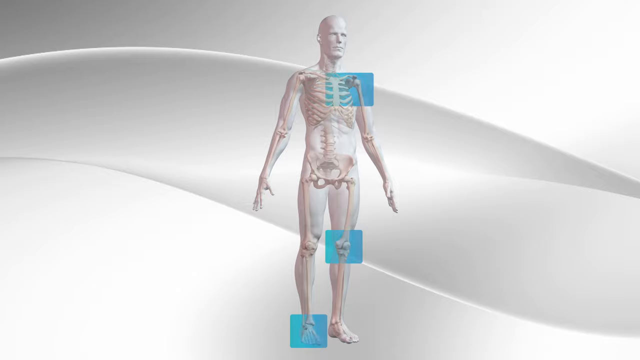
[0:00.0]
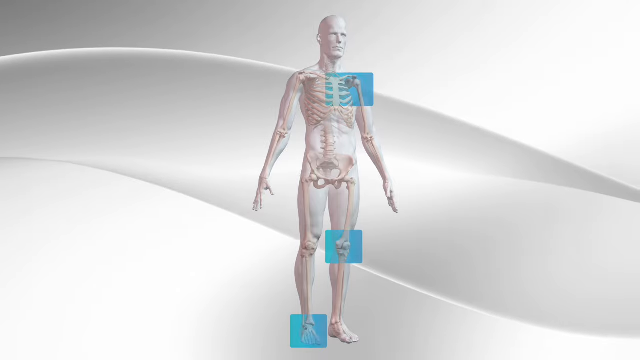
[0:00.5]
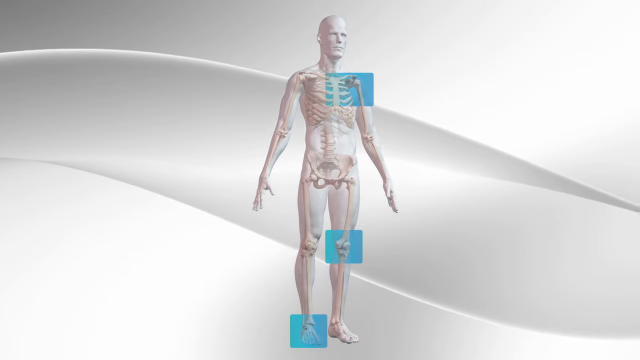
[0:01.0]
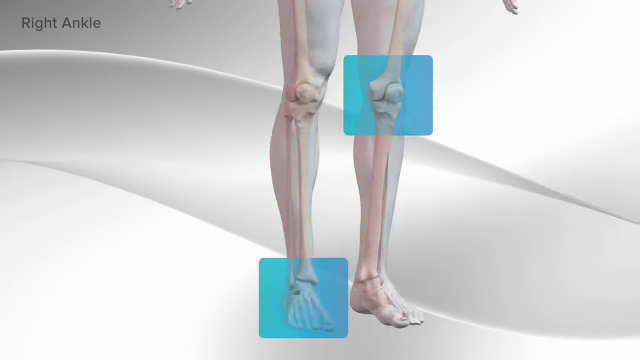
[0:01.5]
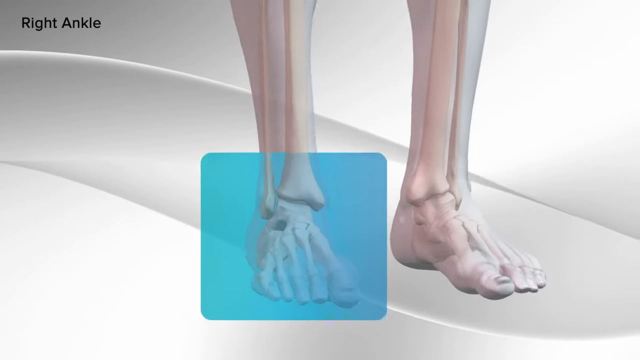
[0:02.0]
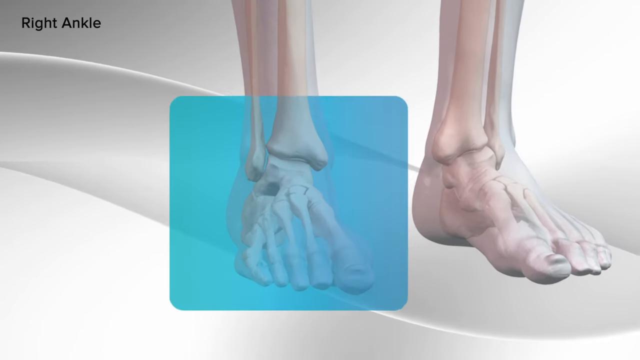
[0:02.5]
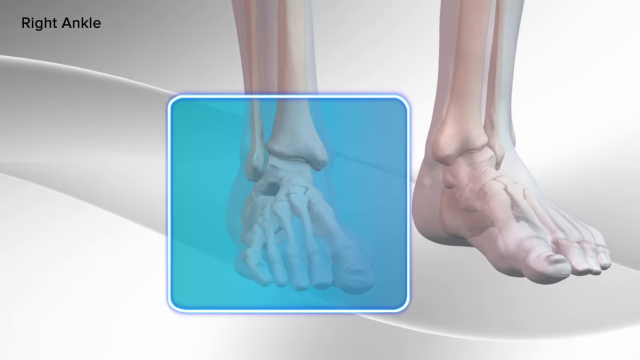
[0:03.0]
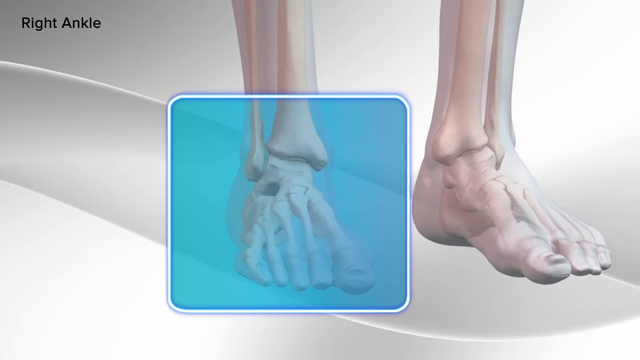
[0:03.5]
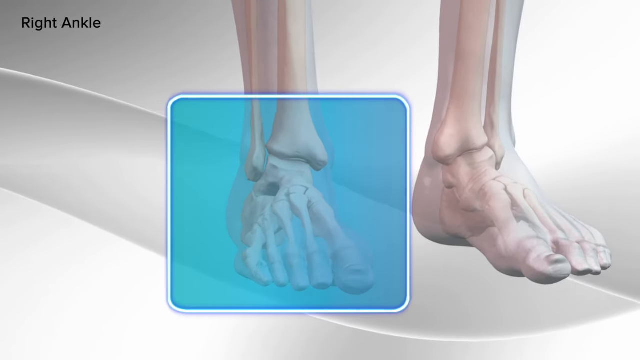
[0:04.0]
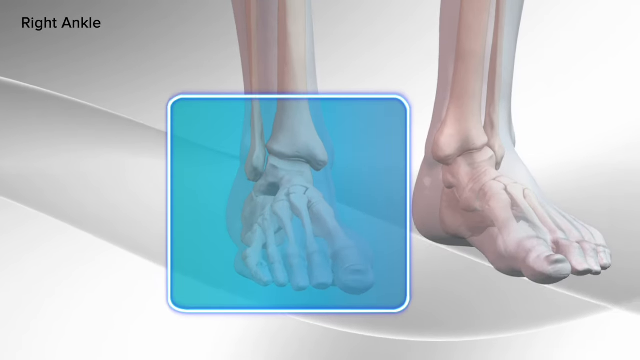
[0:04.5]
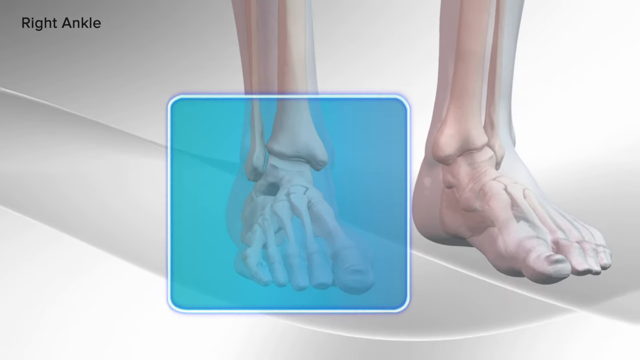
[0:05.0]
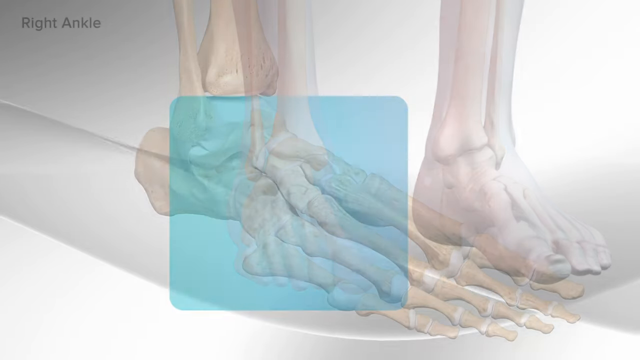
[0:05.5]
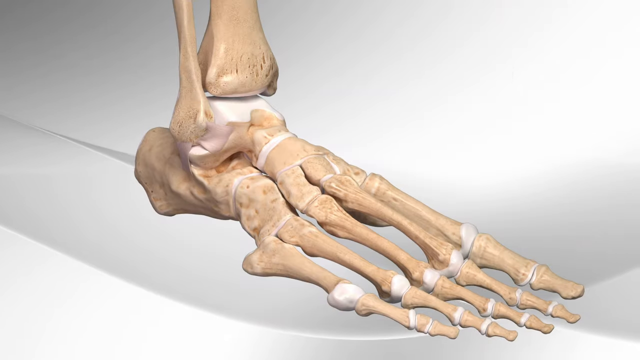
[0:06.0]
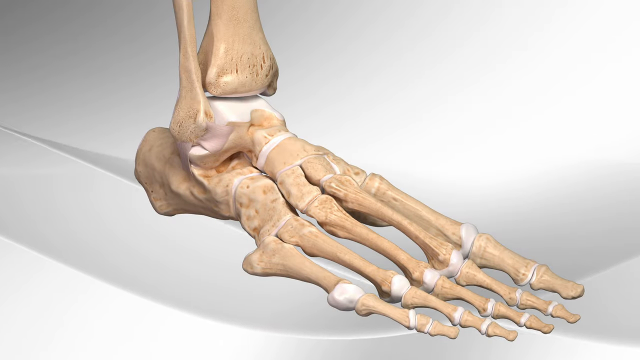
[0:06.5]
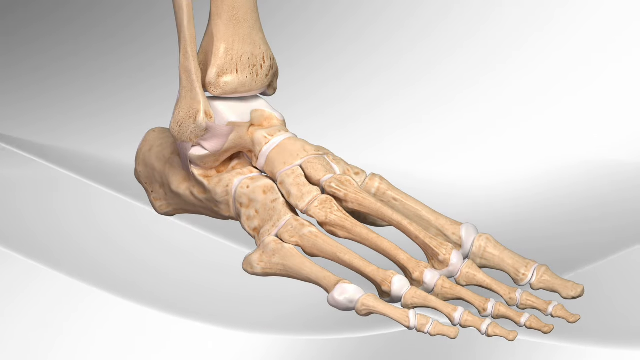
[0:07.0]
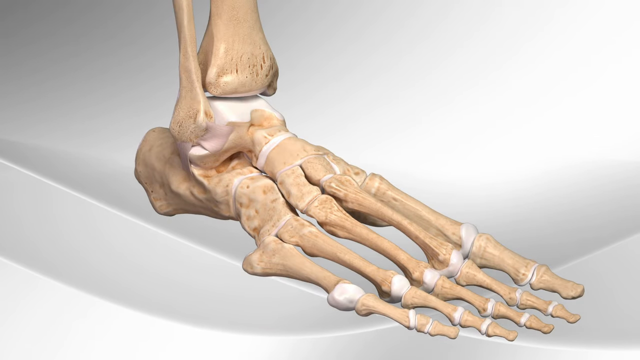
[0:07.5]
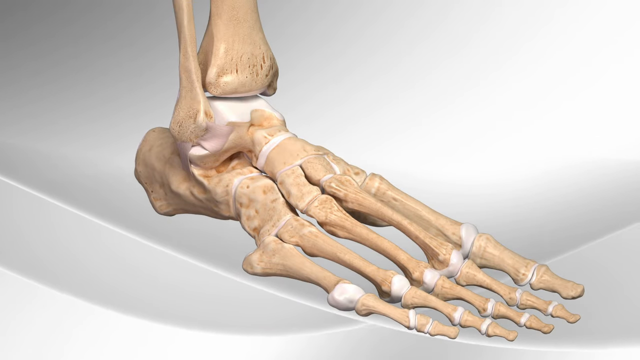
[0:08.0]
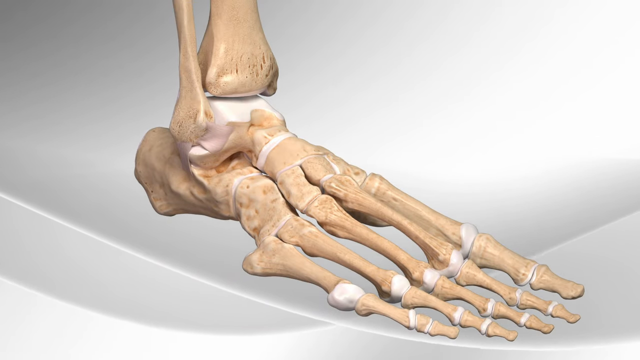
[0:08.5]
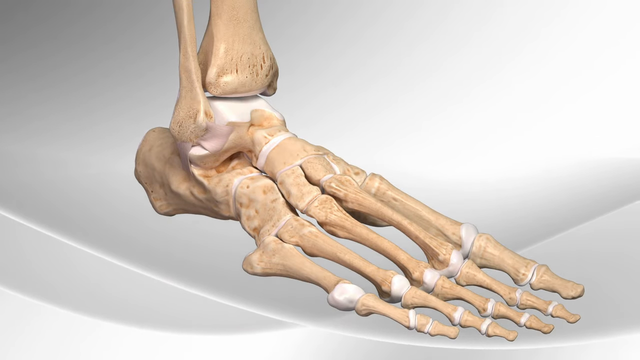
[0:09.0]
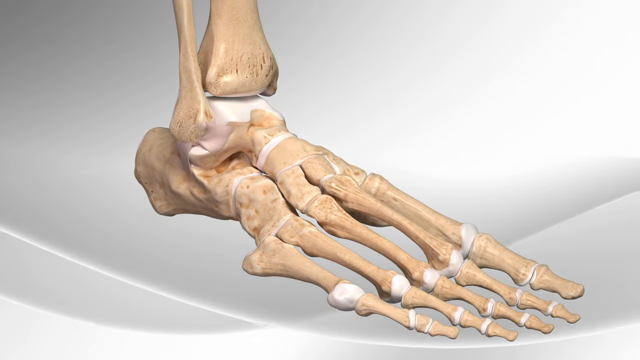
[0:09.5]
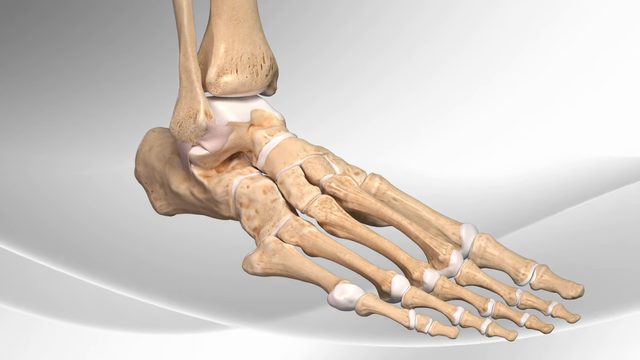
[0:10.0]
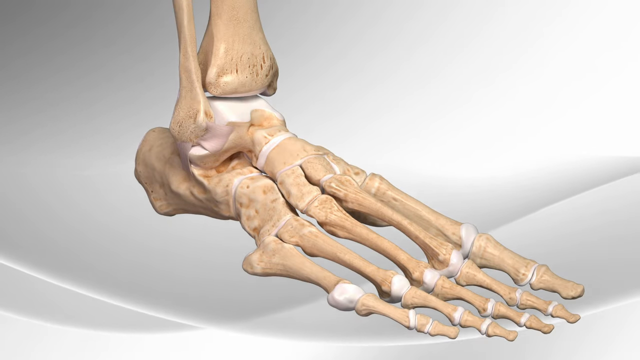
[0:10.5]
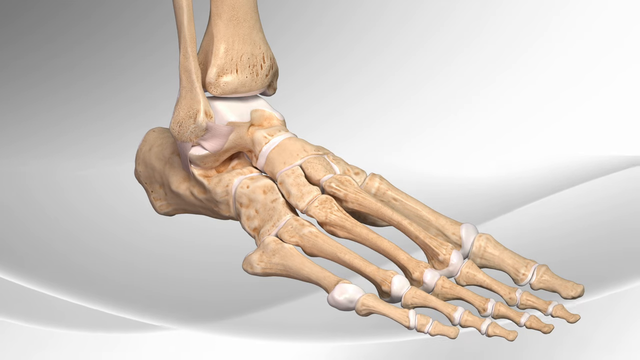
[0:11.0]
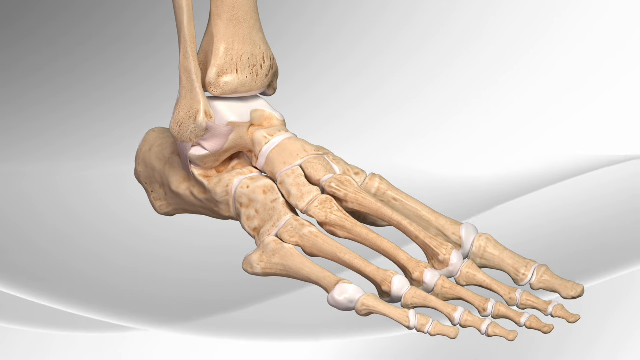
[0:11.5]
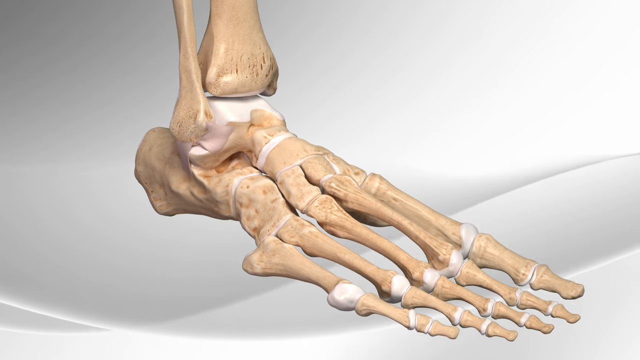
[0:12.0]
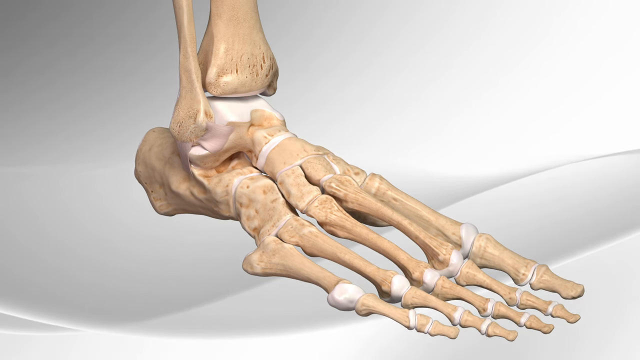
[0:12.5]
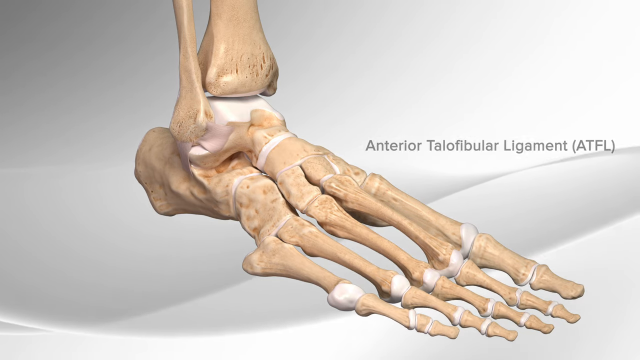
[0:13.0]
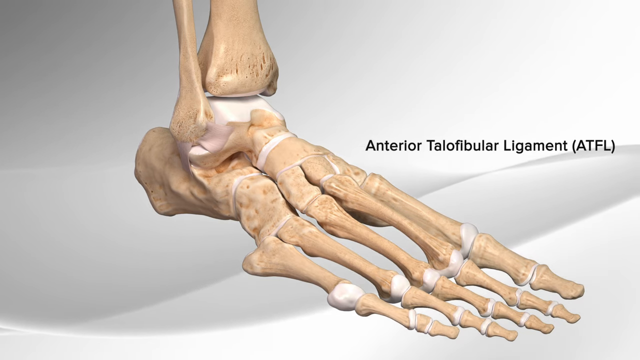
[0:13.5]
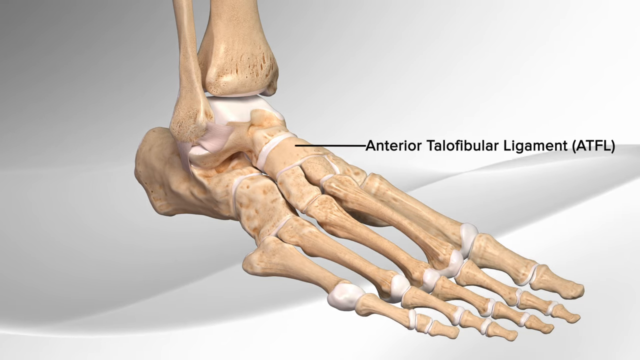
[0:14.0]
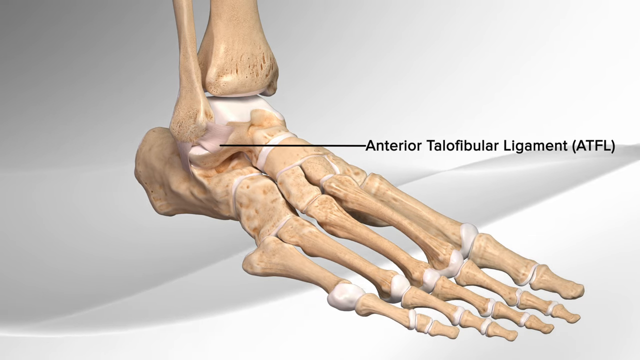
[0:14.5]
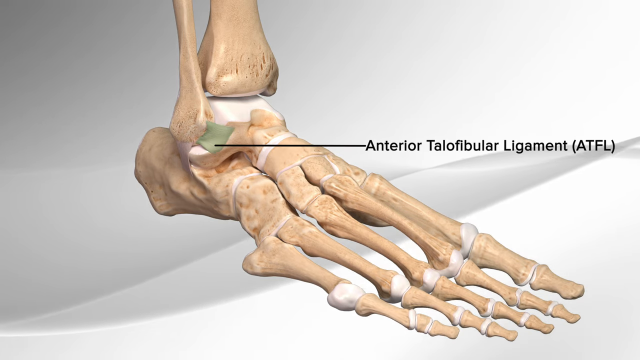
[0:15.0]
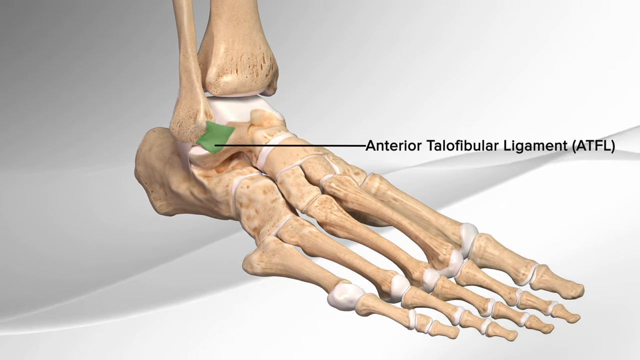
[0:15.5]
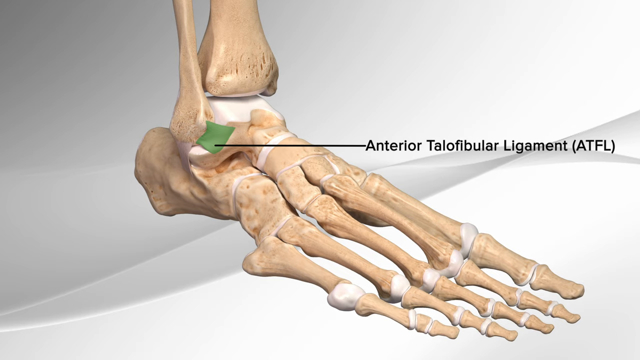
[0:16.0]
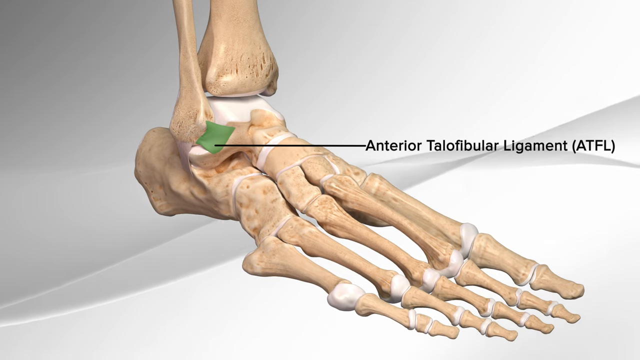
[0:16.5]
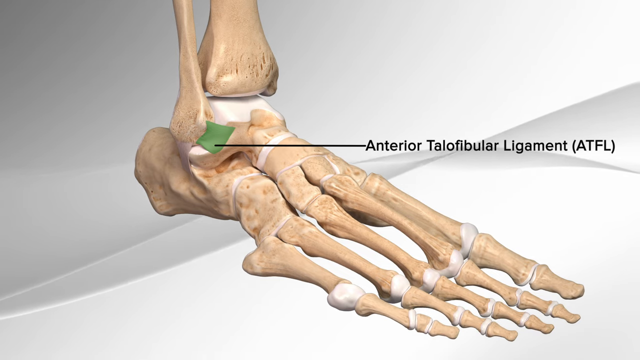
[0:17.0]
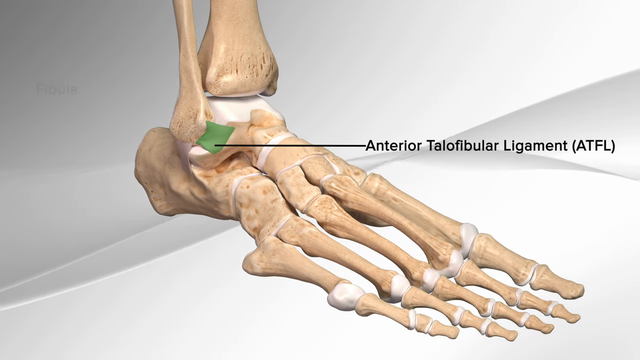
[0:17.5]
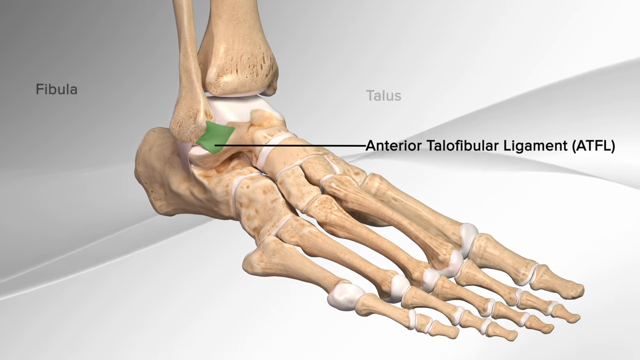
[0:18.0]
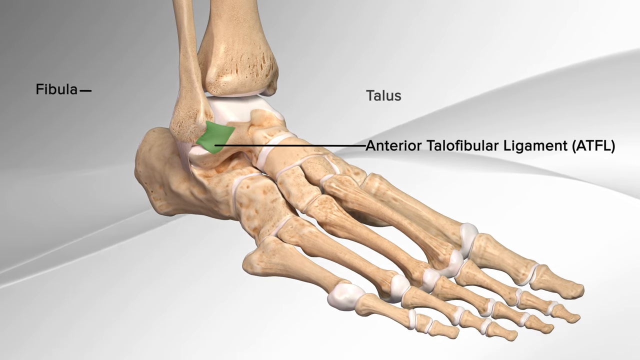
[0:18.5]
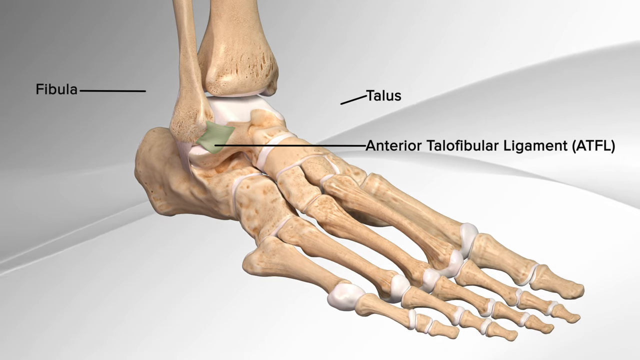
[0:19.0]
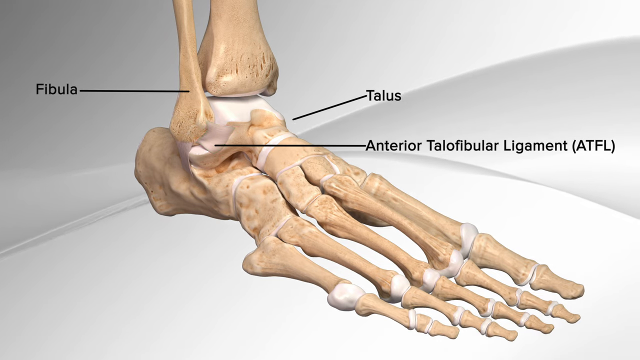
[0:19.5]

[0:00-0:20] The video opens on an entire skeleton with three blue highlighted areas: the left shoulder, the left knee and the right foot. It then zooms in on the right foot, which is shown in a blue box, and the text "right ankle" appears in the upper left. The bones of the foot are shown against a white background. Text reads "anterior talofibular ligament, ATFL" and points to that ligament at the top of the foot, which is highlighted as a little green area. On the left, "fibula" appears with a pointer to that bone, and on the right, above the ATFL, "talus" appears with a pointer to it.